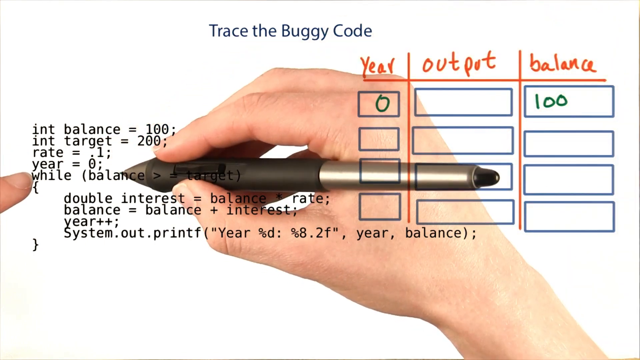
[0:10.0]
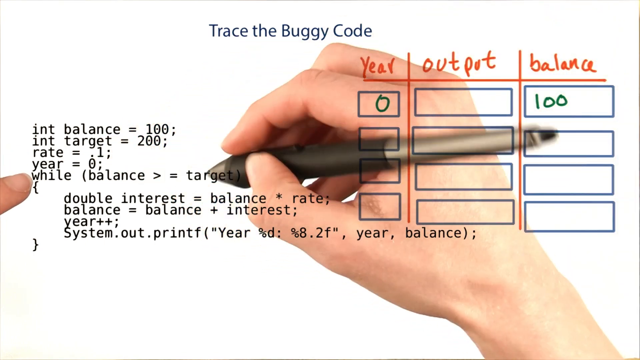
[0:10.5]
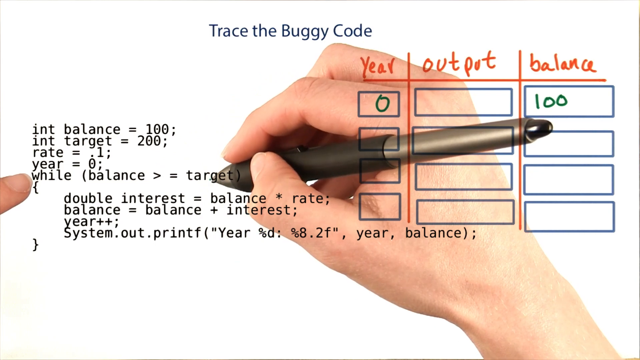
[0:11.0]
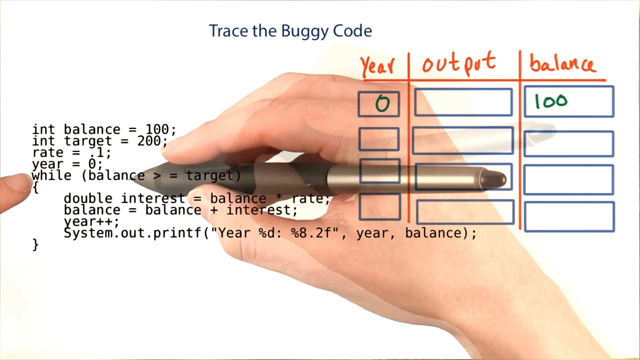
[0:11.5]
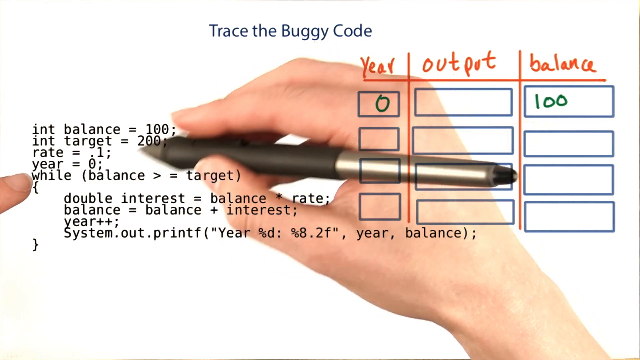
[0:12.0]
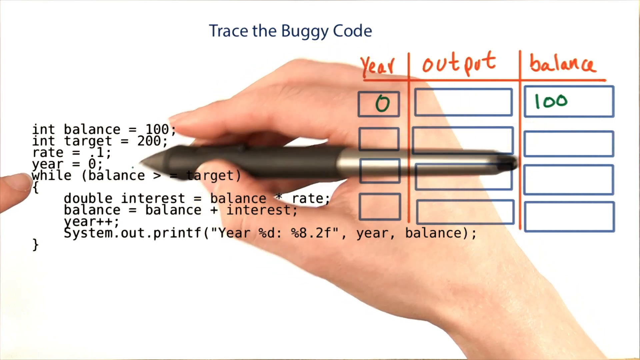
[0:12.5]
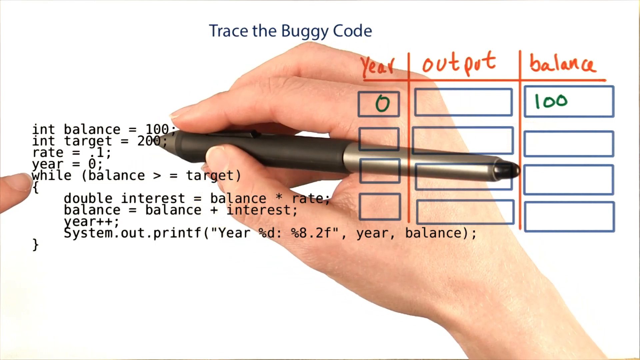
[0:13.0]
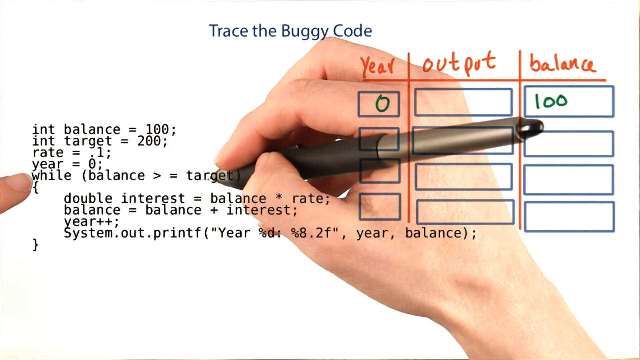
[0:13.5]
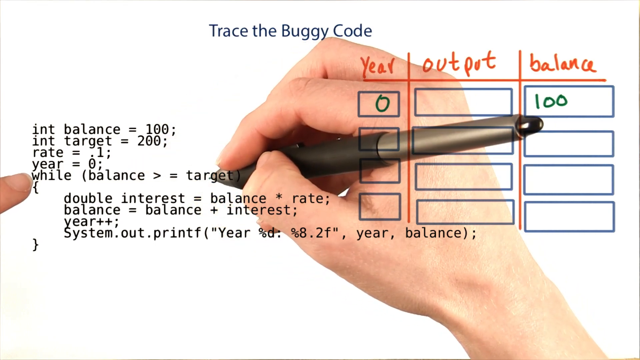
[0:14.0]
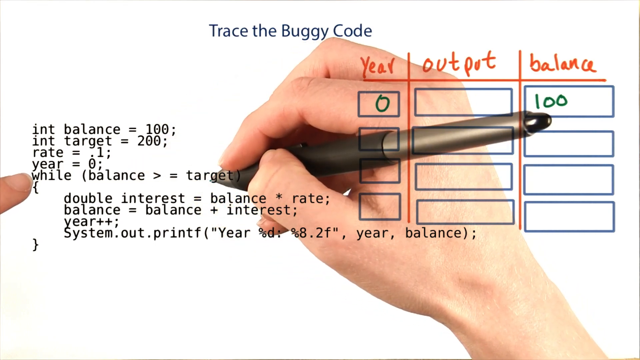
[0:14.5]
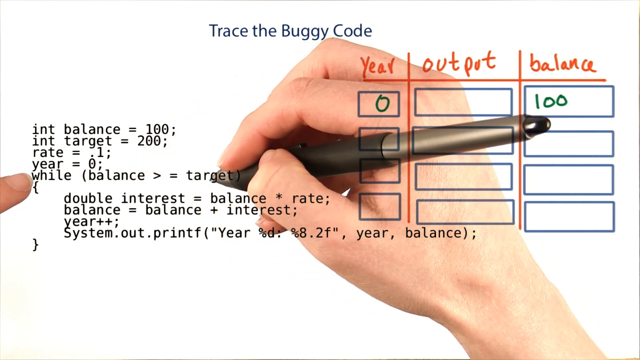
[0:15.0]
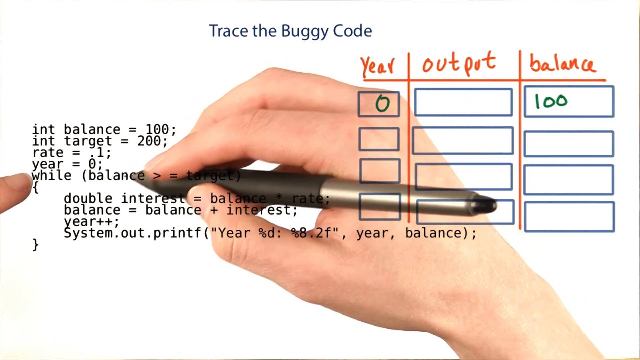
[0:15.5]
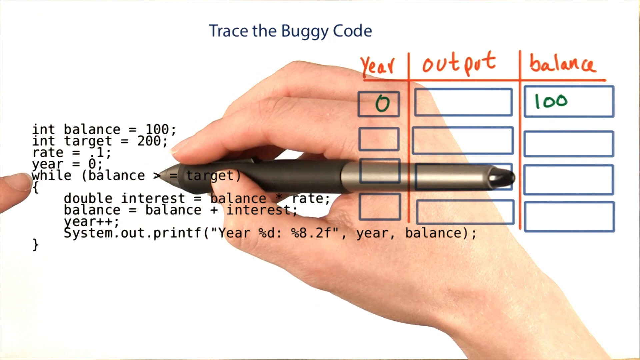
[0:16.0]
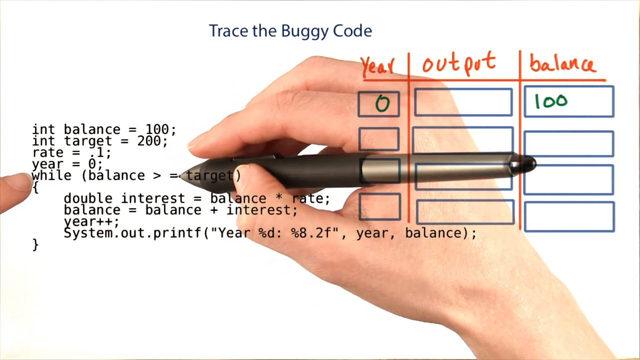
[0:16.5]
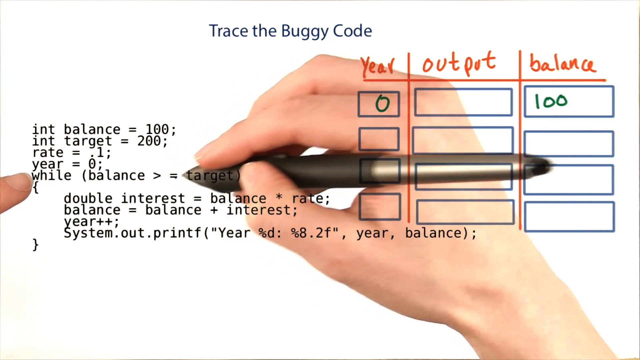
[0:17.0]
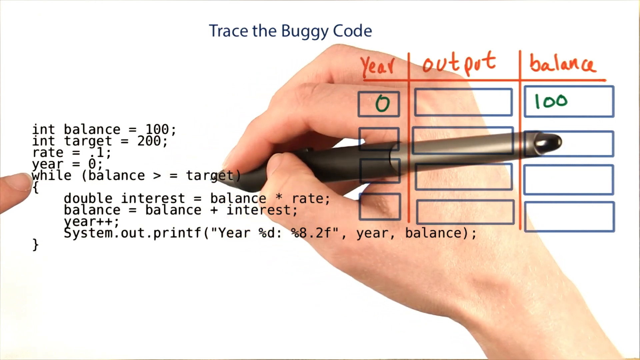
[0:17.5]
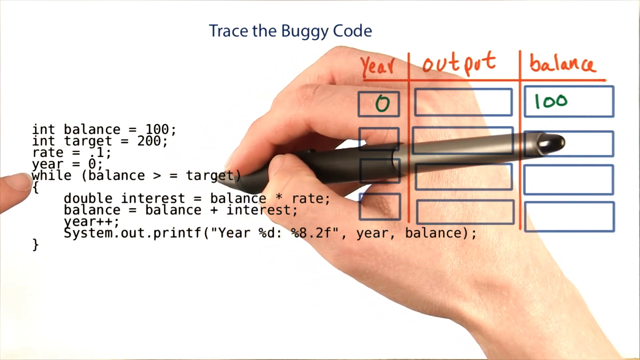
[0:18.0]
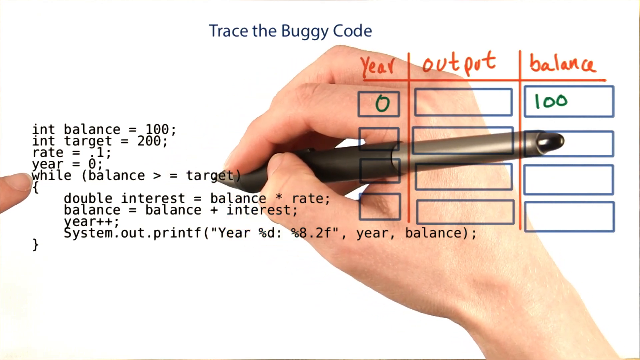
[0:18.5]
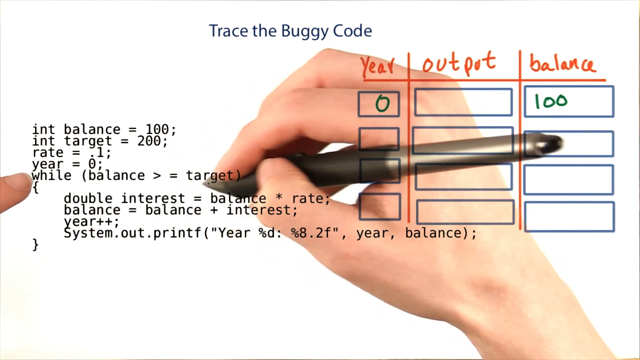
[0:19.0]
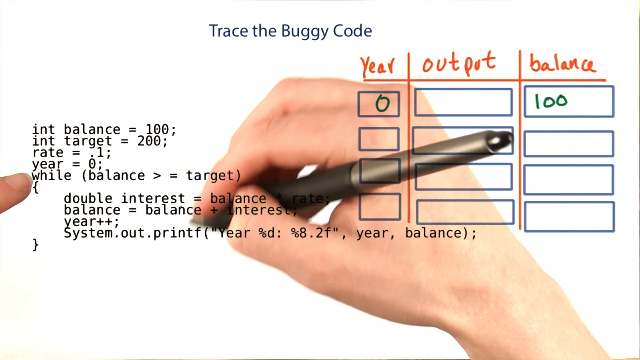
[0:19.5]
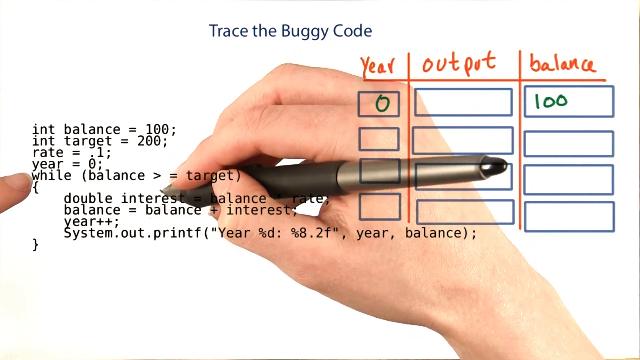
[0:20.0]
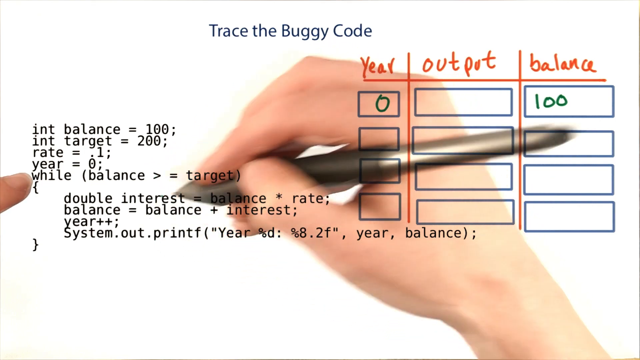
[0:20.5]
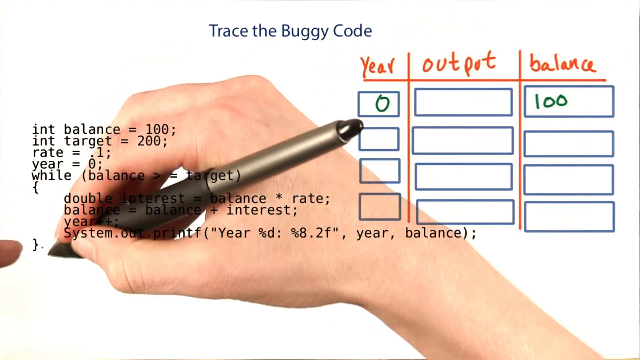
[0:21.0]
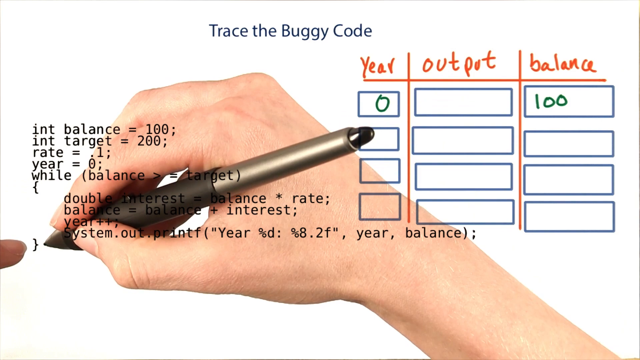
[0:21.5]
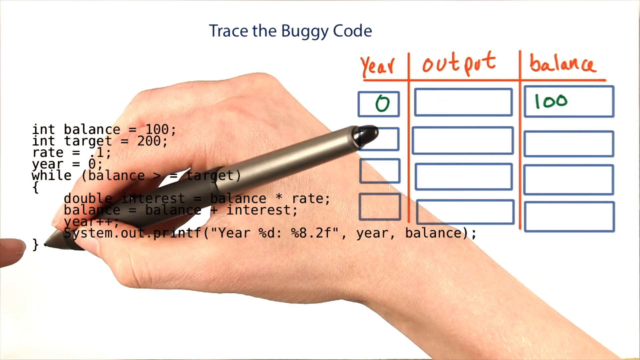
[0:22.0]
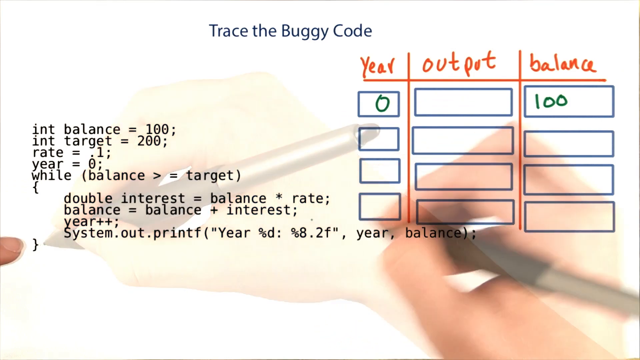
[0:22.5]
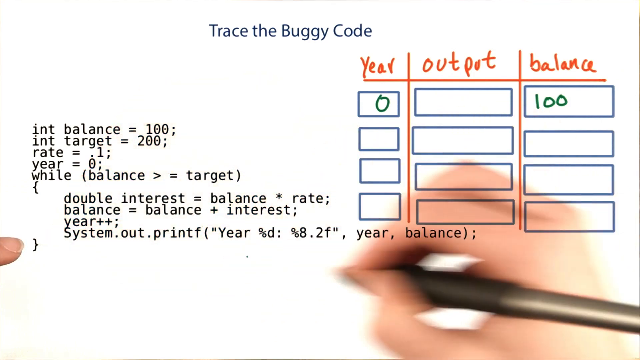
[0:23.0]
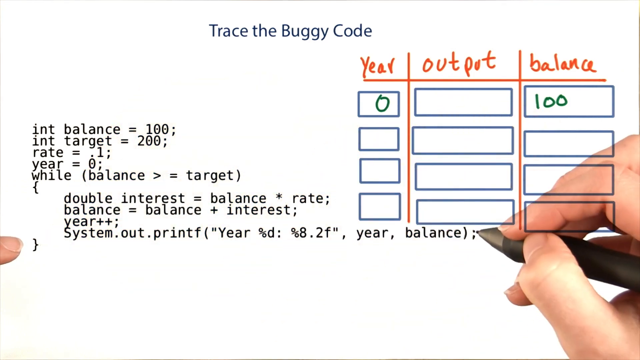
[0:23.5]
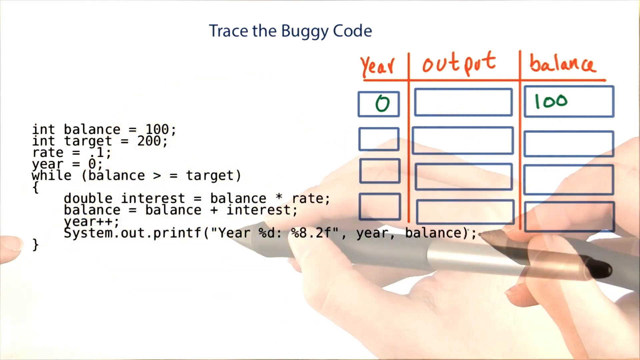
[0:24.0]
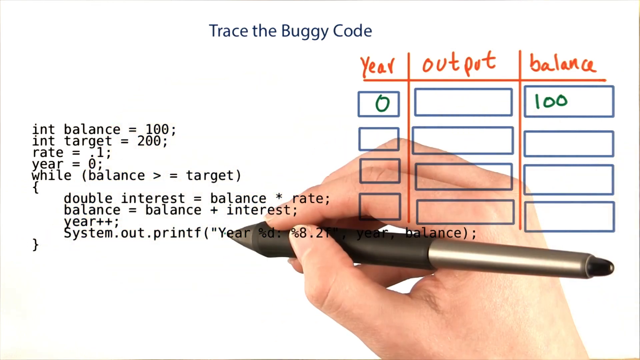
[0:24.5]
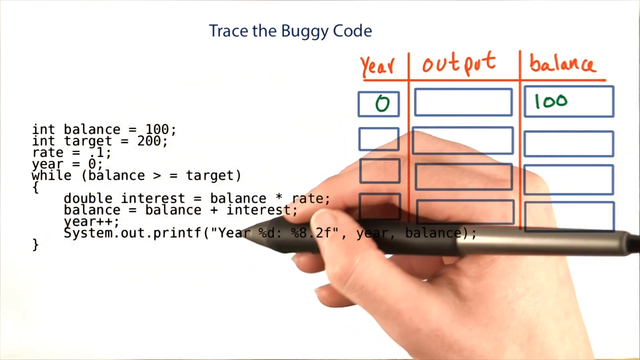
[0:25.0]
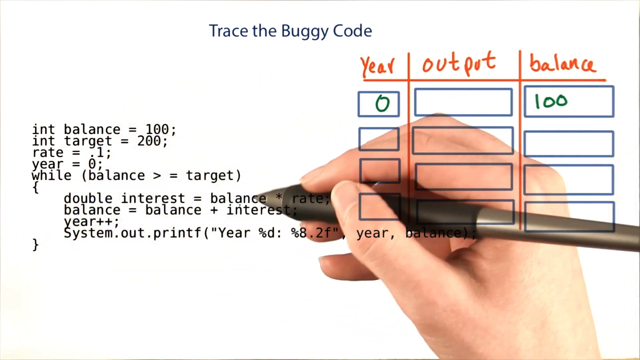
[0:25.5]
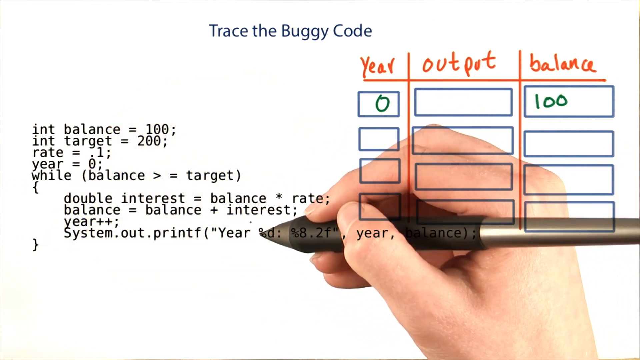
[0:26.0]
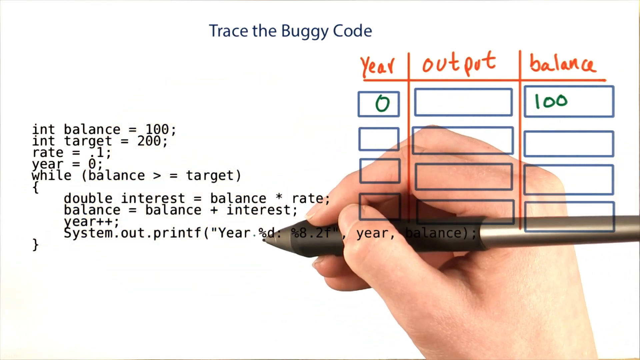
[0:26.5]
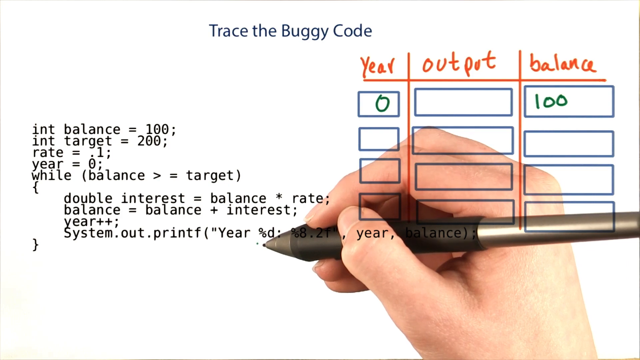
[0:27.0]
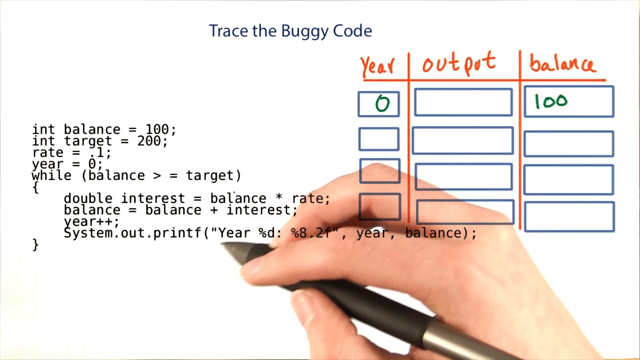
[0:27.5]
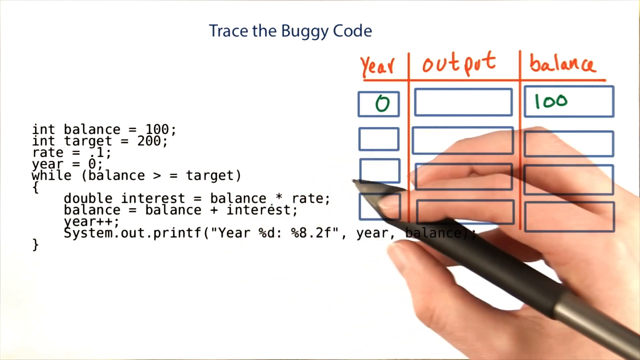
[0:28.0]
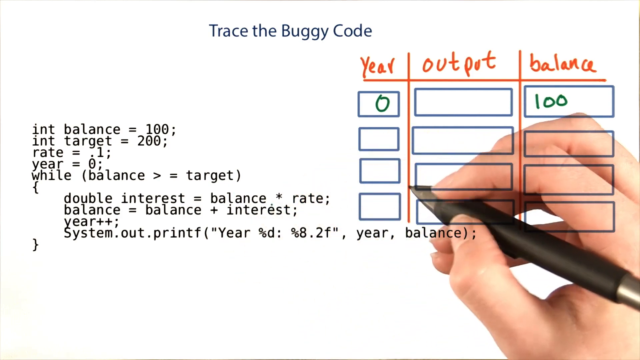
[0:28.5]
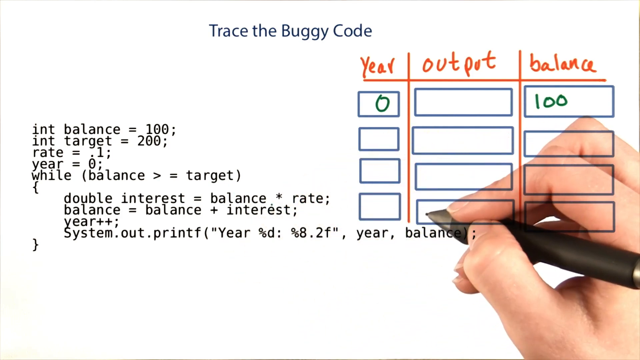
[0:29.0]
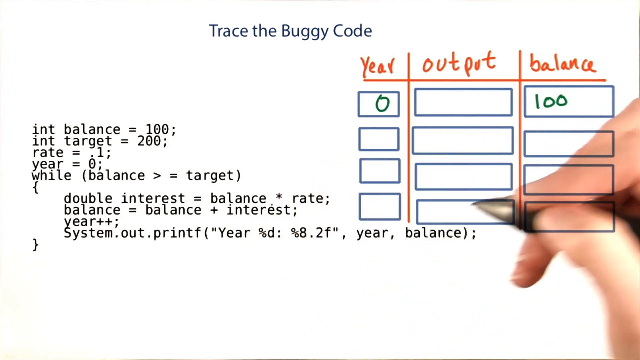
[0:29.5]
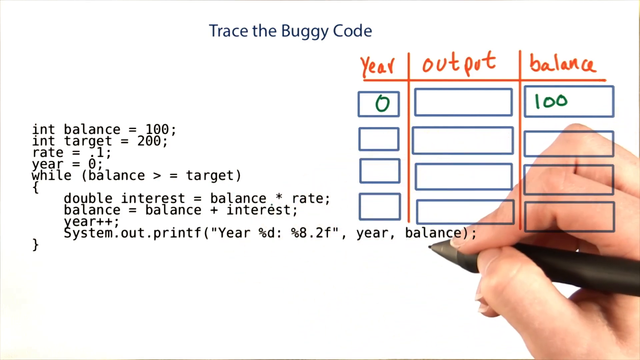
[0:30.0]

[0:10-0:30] The Java-style code snippet in black text remains on screen, with the Caucasian hand holding a pen and a sort of table written on the whiteboard showing year, output, and balance. The person goes over the while loop, pointing at a few different variables. Text says "trace the buggy code" in reference to the code snippet on screen. The hand continues pointing at different variables, including balance and target, and at some of the symbols in the code snippet, with the hand kind of appearing behind the screen with the text on it, seemingly phasing into the whiteboard in the background. The shot ends after different parts of the code snippet are highlighted, with the person pointing the pen at balance and target.